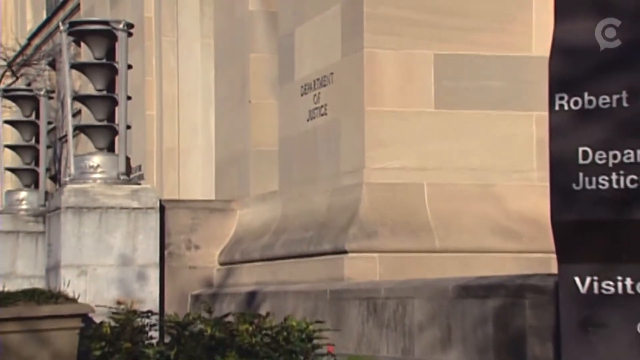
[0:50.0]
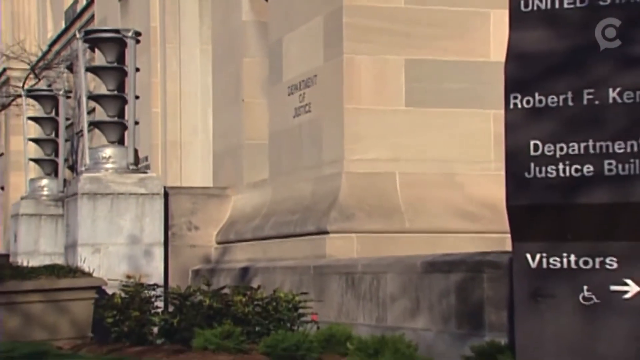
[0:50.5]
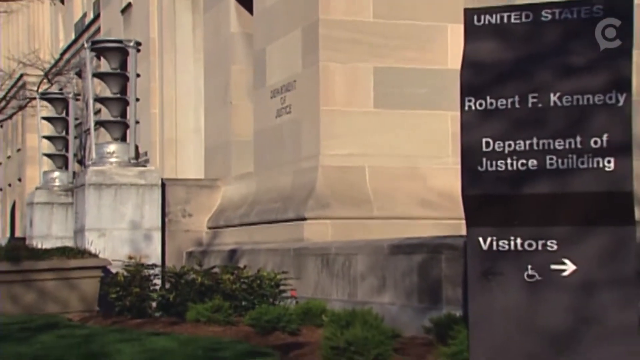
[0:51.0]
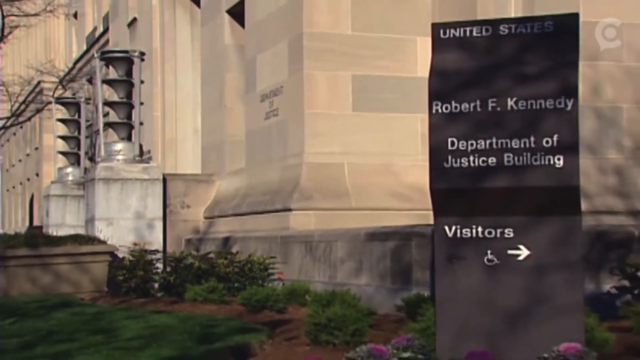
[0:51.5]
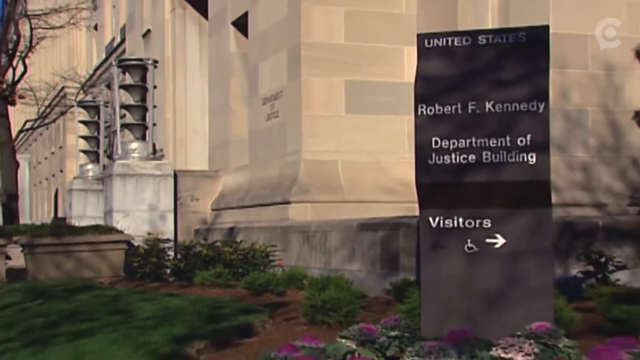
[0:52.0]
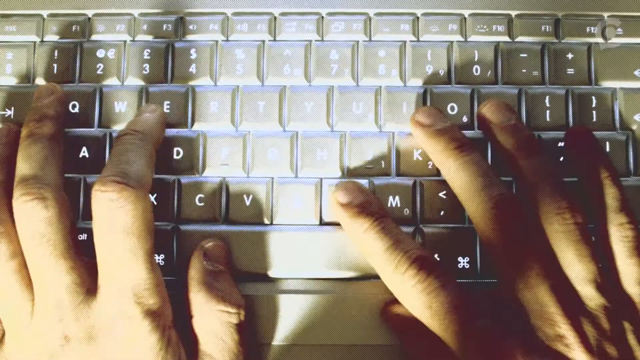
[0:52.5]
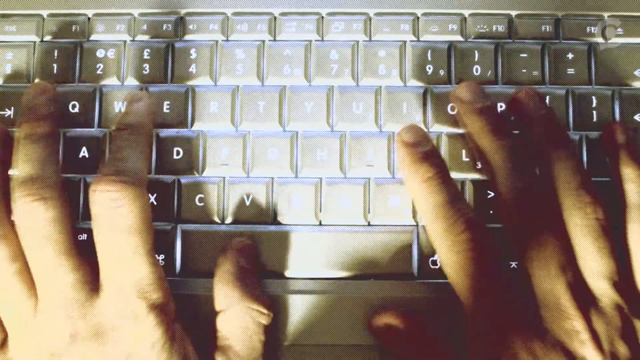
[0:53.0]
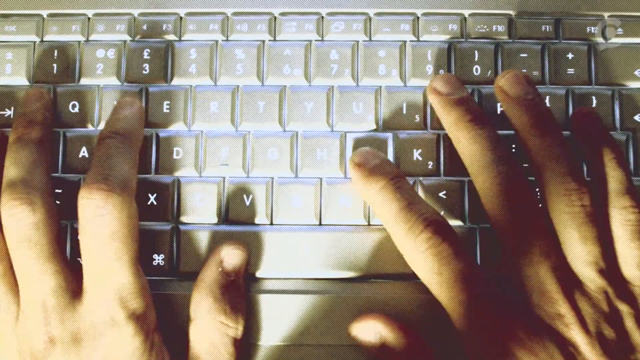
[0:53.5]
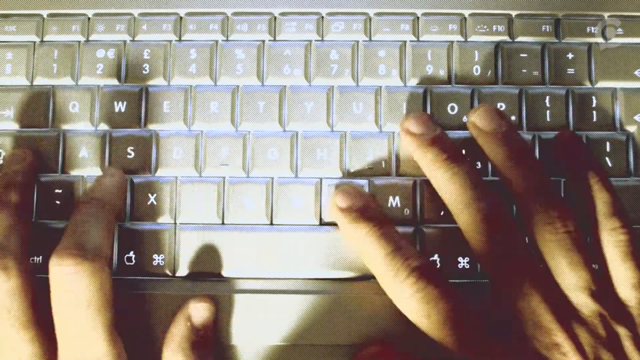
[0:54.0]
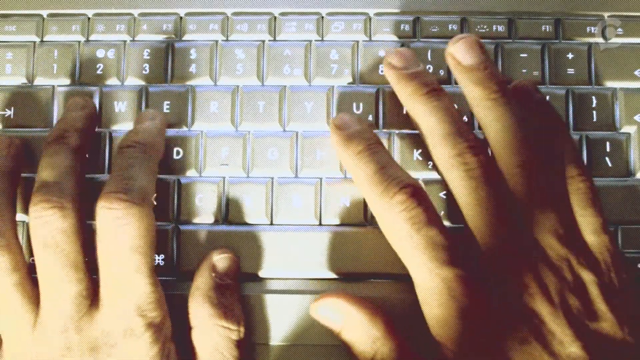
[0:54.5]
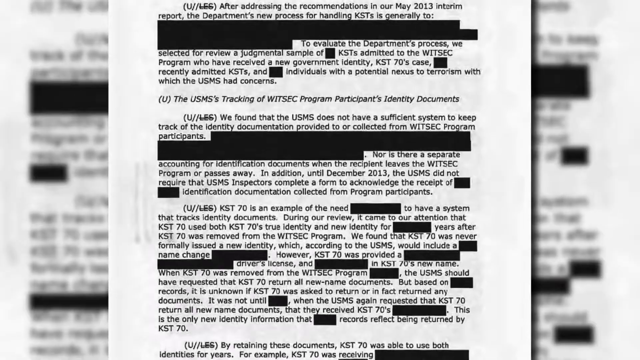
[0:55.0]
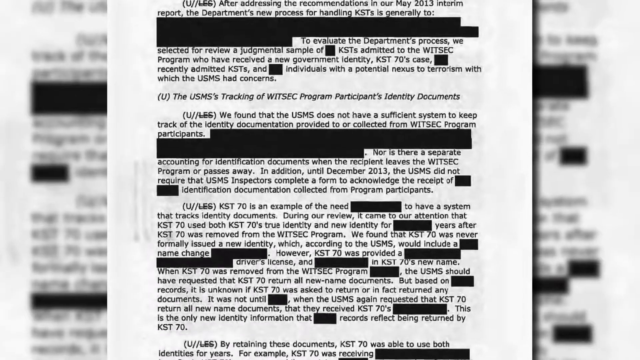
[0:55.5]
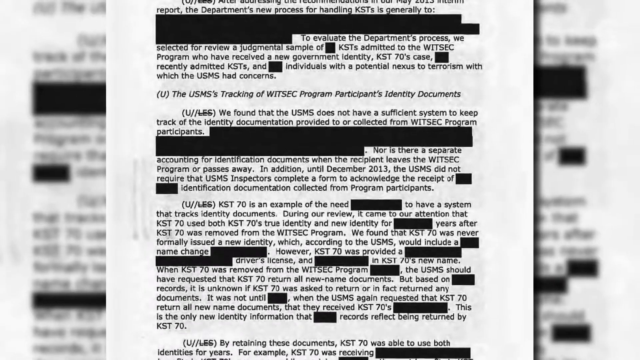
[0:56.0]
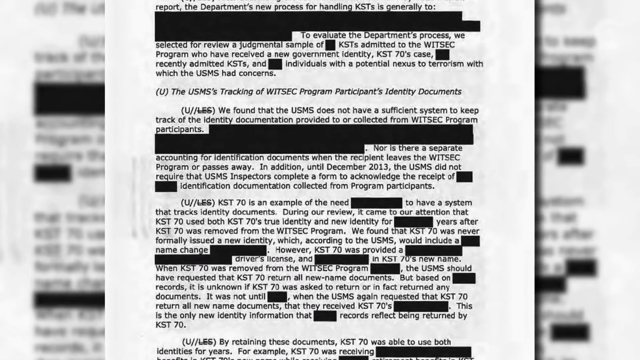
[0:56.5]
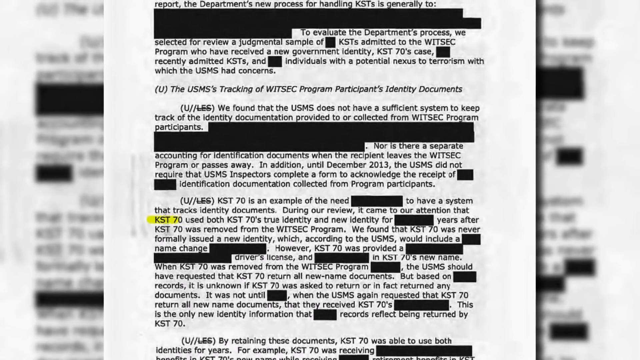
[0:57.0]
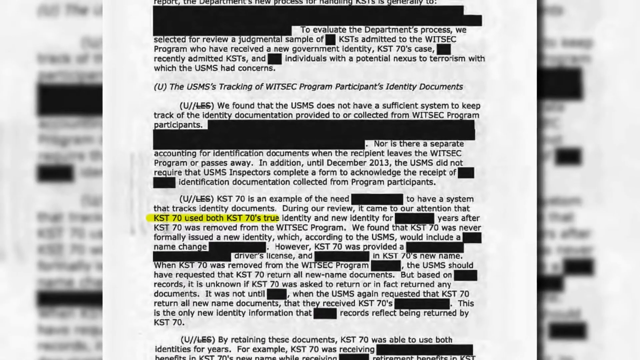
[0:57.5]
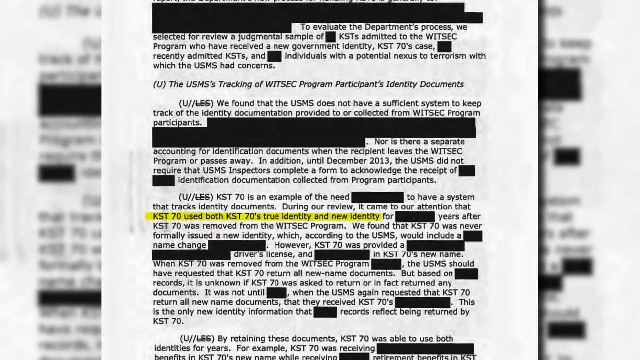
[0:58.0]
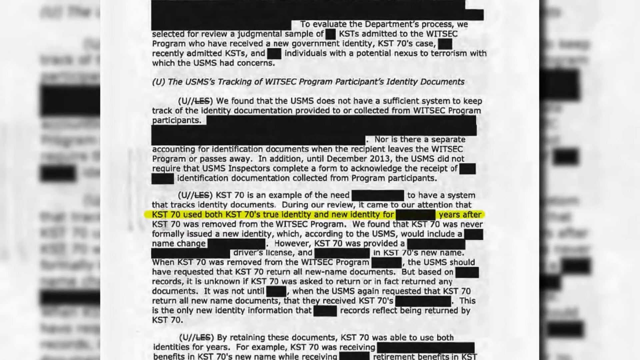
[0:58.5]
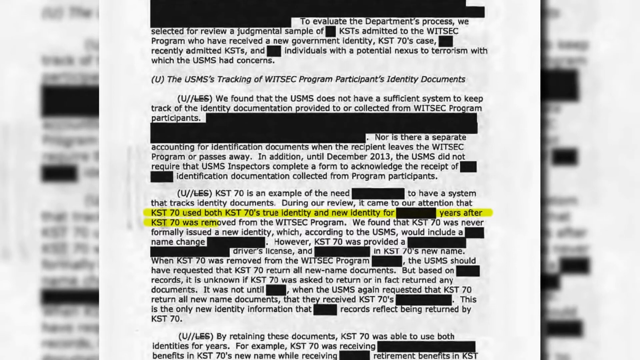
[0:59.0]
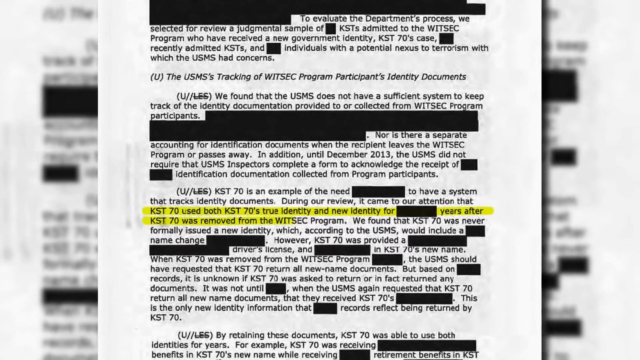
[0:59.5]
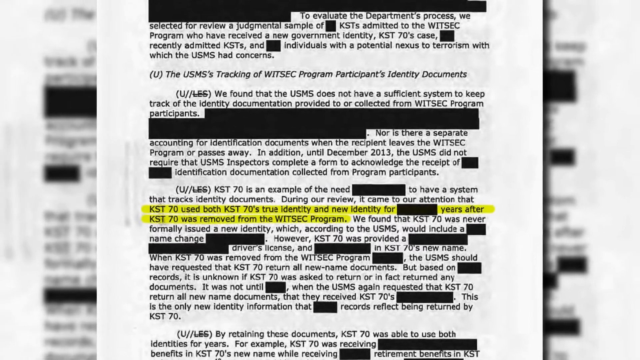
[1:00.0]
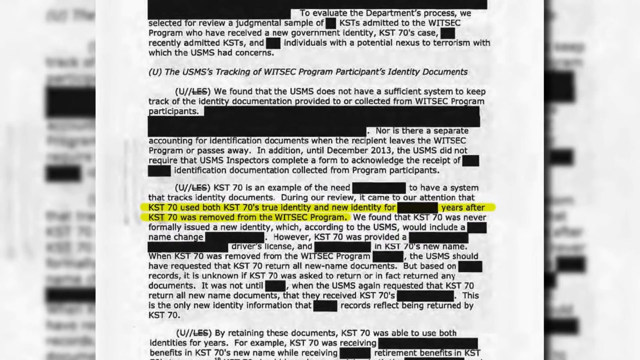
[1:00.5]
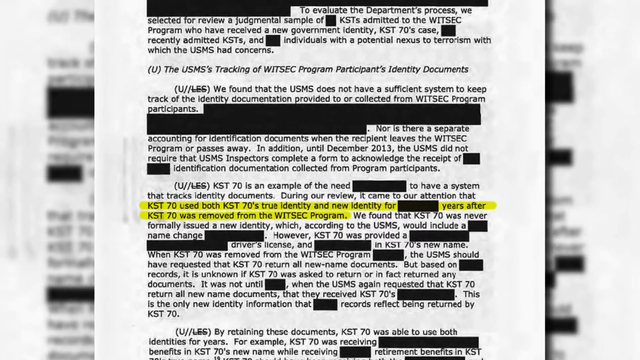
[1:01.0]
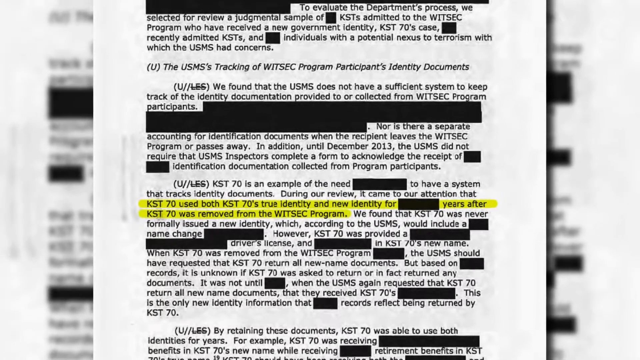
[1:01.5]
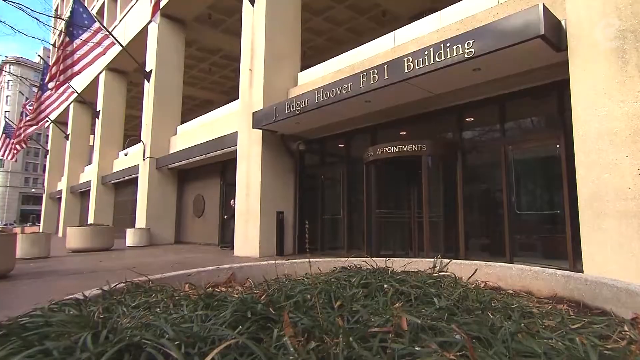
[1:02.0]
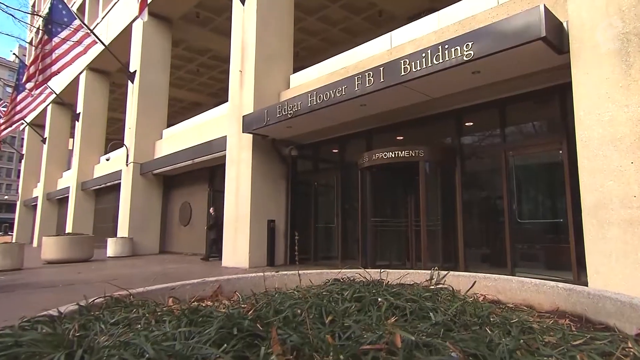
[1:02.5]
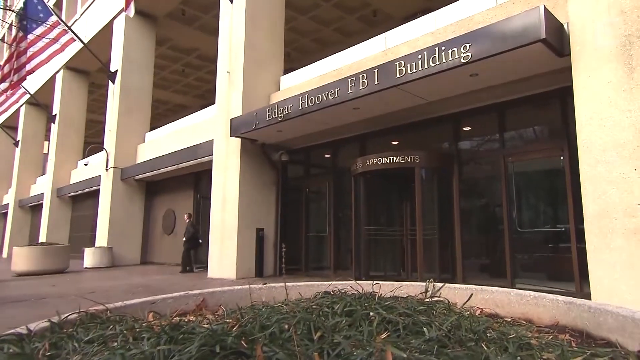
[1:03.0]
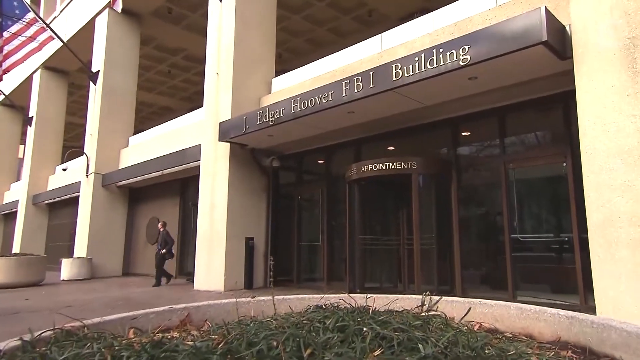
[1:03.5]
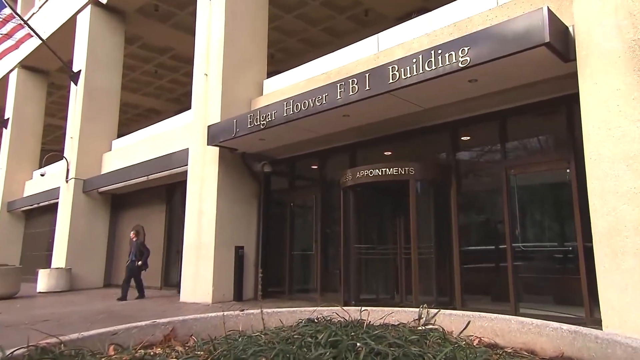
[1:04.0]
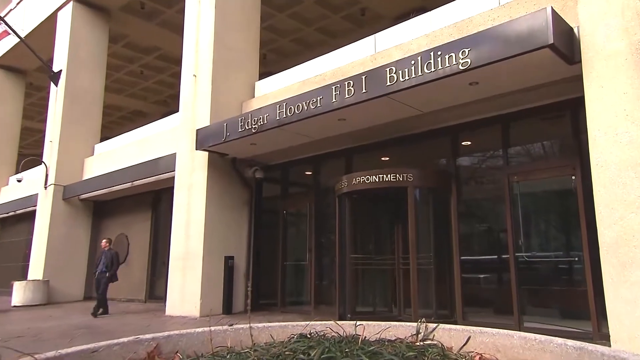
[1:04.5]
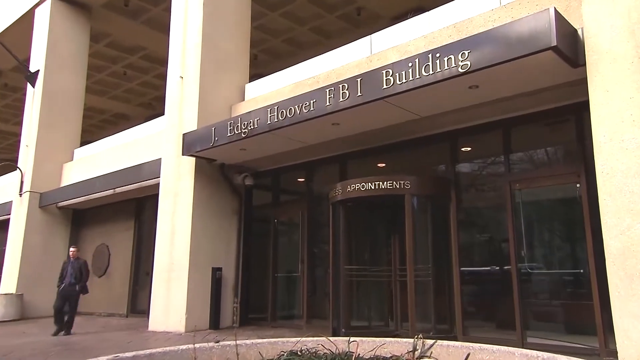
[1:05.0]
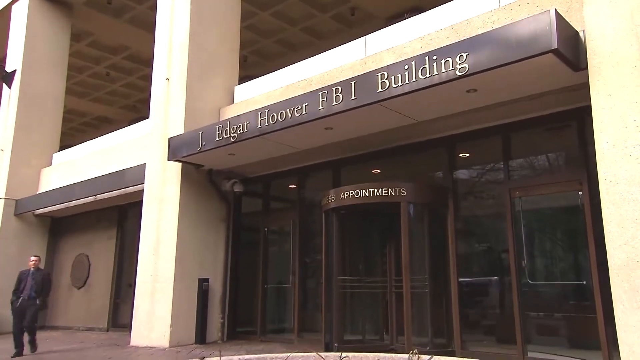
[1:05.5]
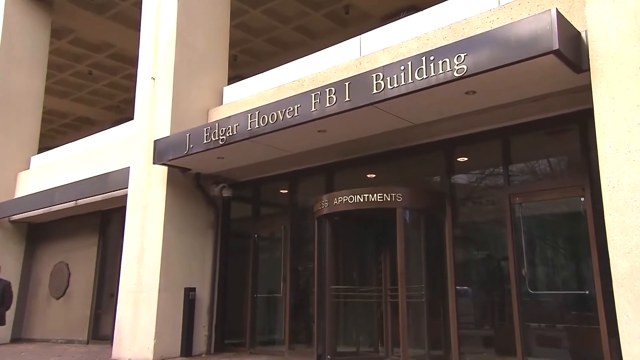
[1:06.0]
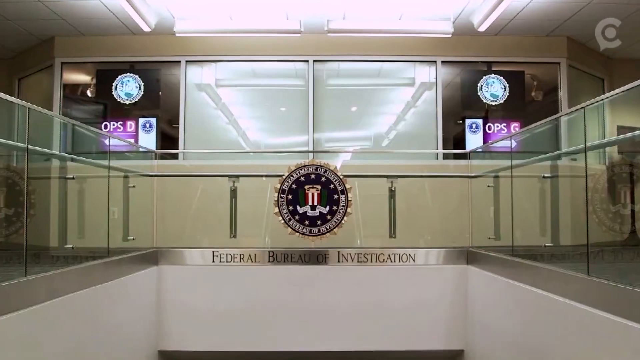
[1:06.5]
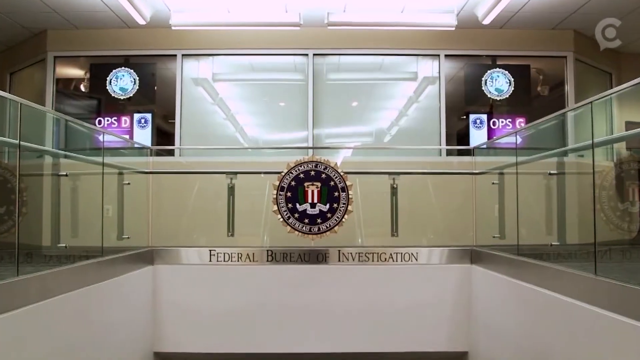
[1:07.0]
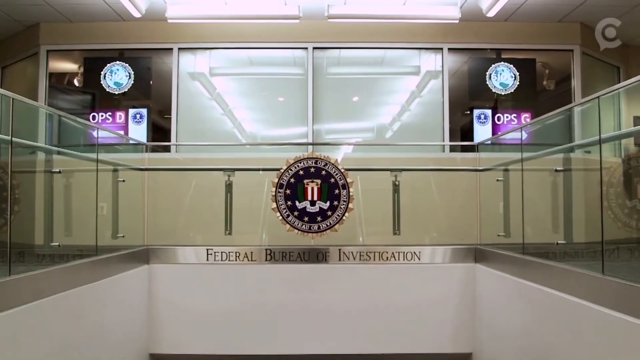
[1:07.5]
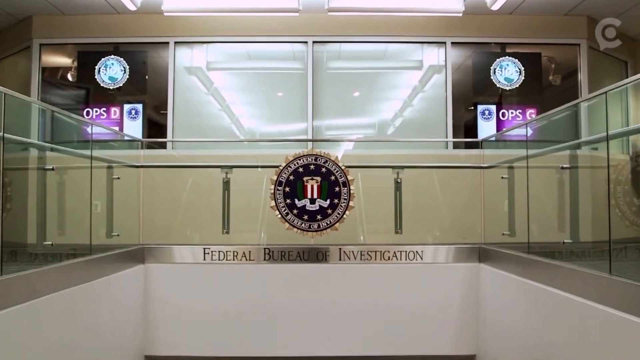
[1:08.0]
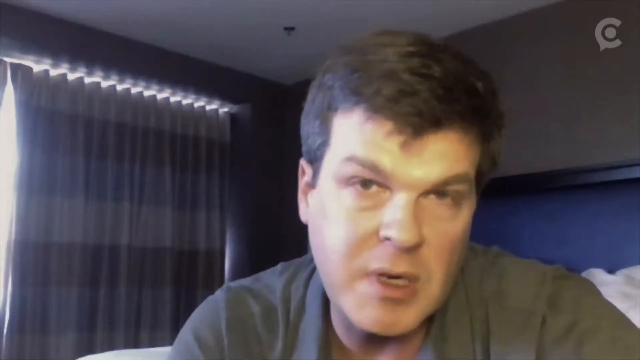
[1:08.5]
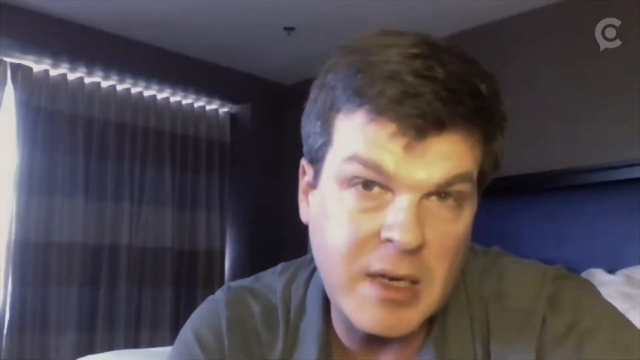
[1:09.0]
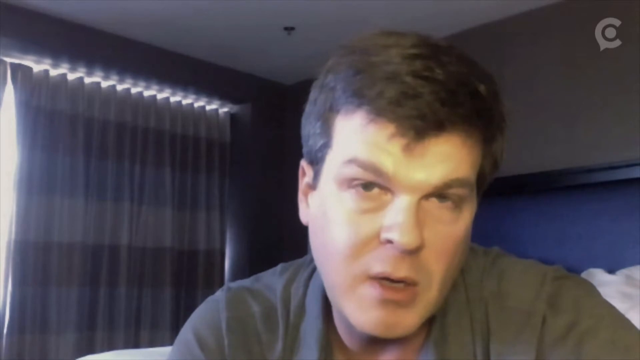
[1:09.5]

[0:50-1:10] The front of the United States Robert F. Kennedy Department of Justice building is shown from its side corner, along with the sign bearing the building's name. The camera pans outward to reveal more of the building. Next, a top view shows two hands typing on a keyboard illuminated with light, so the shadows of the hands are visible as they type. The camera then focuses on a white sheet of paper with many sentences in black ink, many of them blackened out, panning in closer. Next comes the front of the J. Edgar Hoover FBI building, whose lobby has glass doors and a revolving glass door in the middle with "appointments" written across the top. A United States flag is on a flagpole attached to one of the pillars in front of the building. A man in a black suit walks outside the building with his hands in his pockets. The camera pans in closer to the entrance, and then the inside of the building appears, showing the crest or shield of the FBI with the words "Federal Bureau of Investigation" written below it. The interior is mostly a glass structure. Next, a man speaks and appears to be interviewed; only his face is visible, not the interviewer.